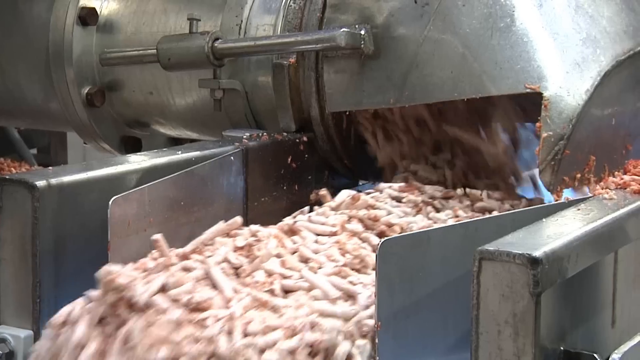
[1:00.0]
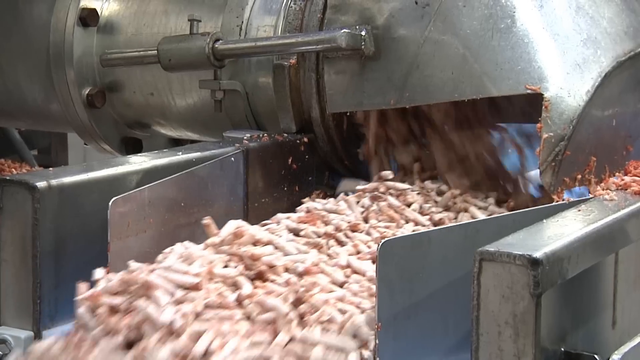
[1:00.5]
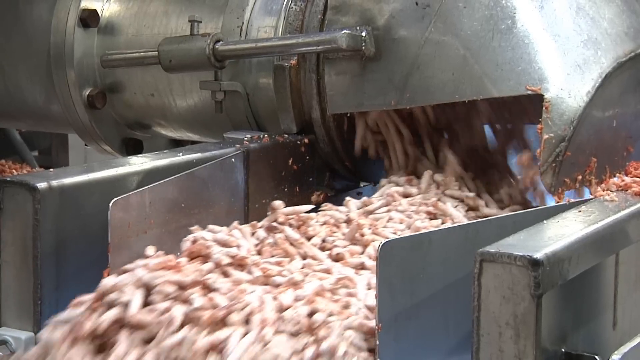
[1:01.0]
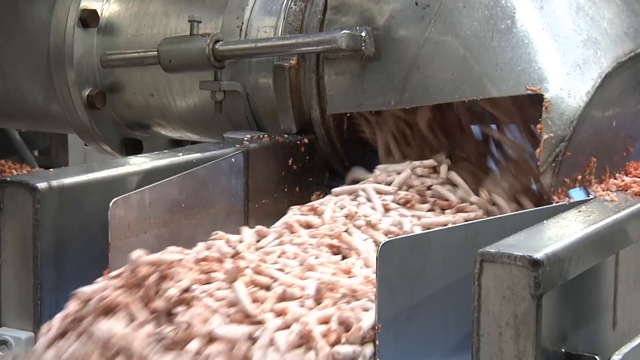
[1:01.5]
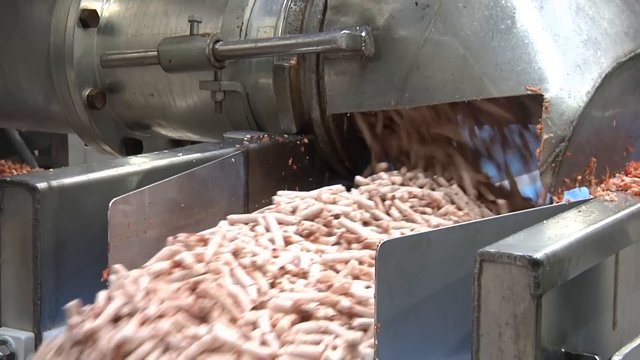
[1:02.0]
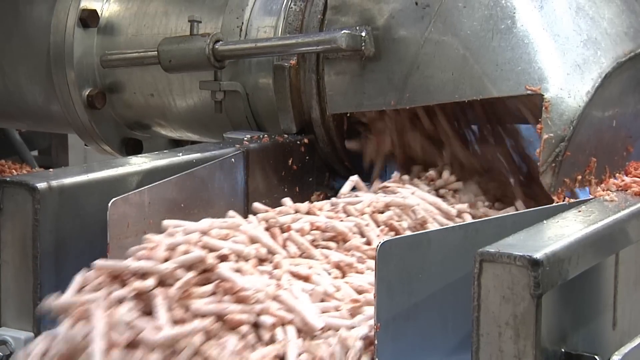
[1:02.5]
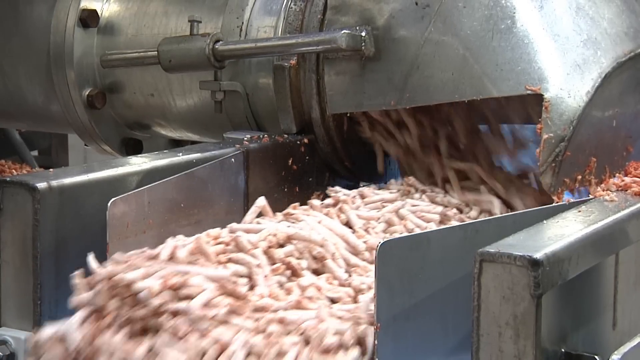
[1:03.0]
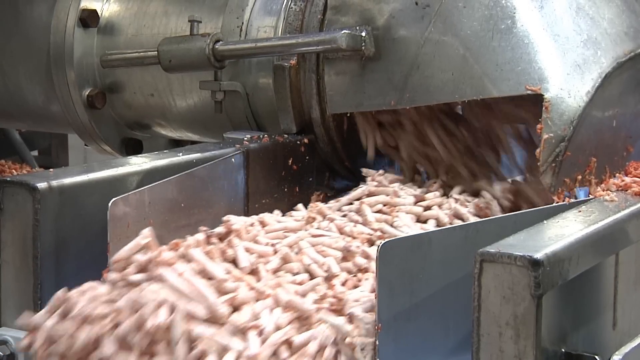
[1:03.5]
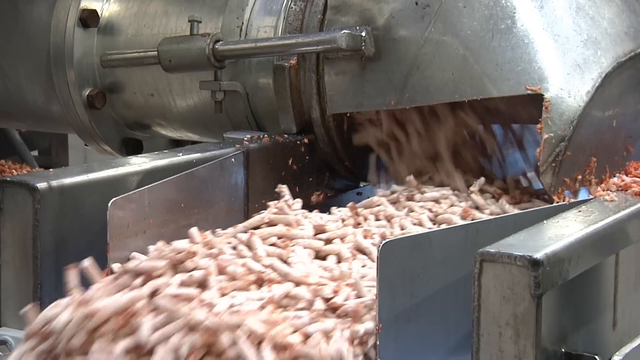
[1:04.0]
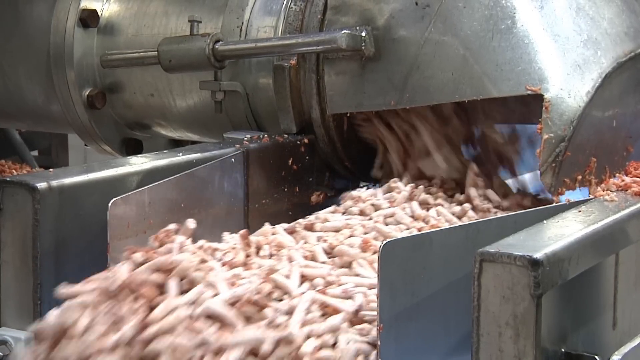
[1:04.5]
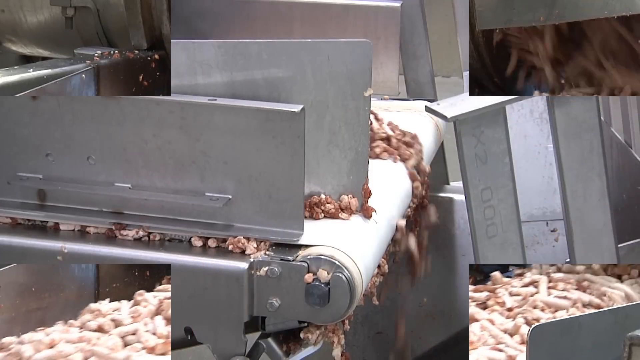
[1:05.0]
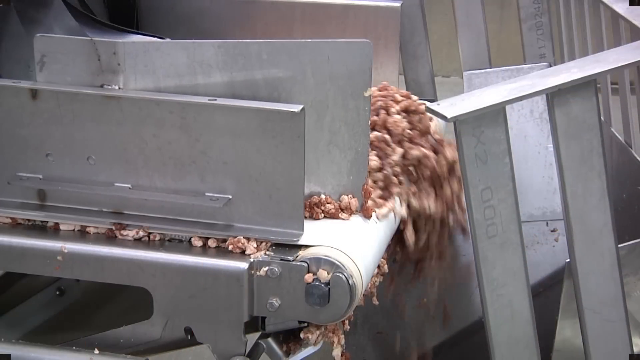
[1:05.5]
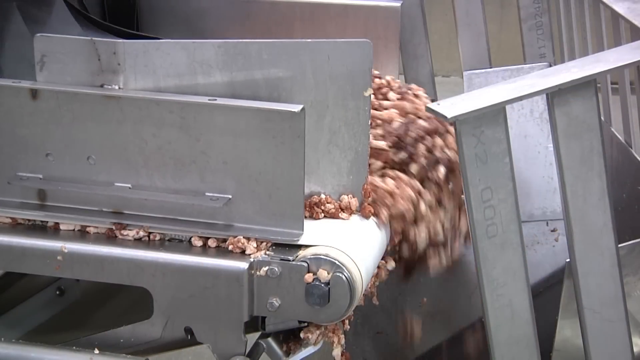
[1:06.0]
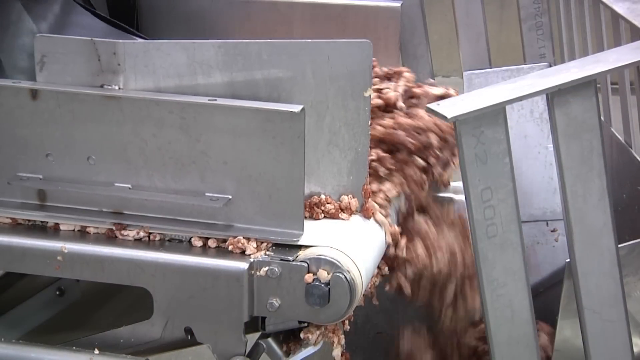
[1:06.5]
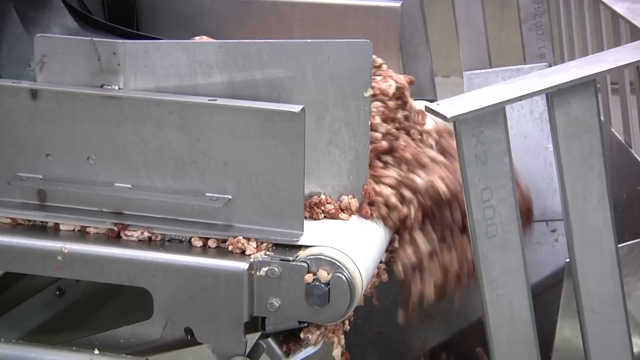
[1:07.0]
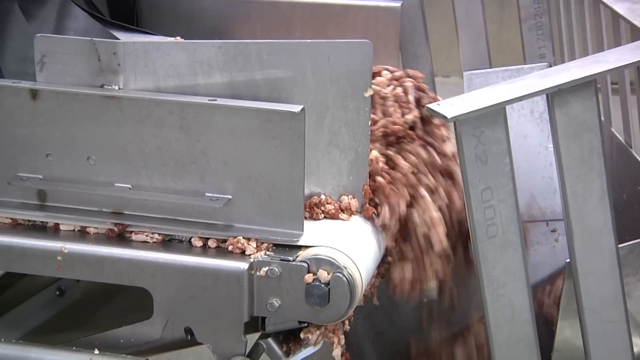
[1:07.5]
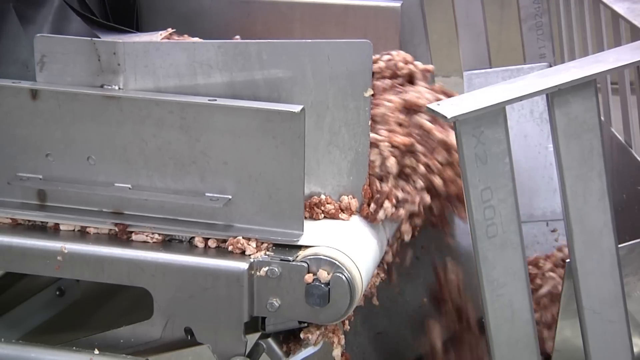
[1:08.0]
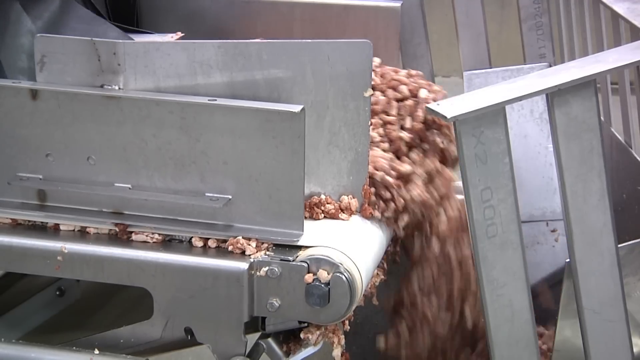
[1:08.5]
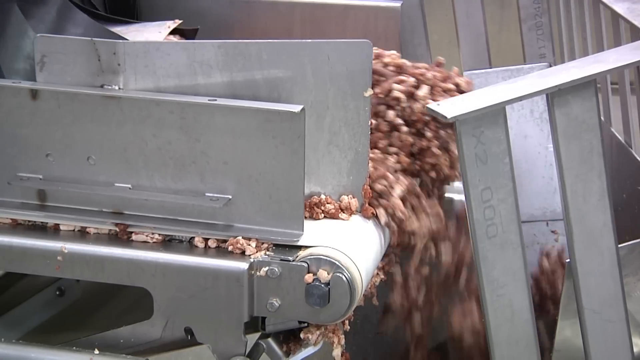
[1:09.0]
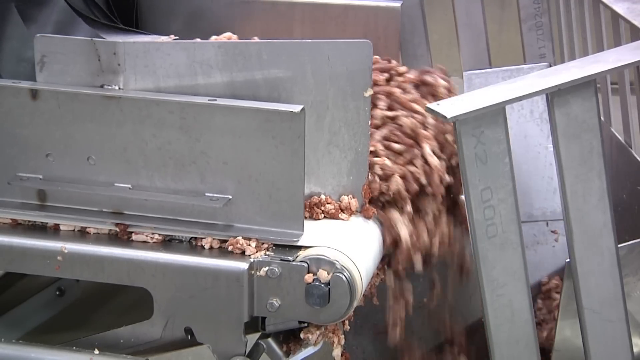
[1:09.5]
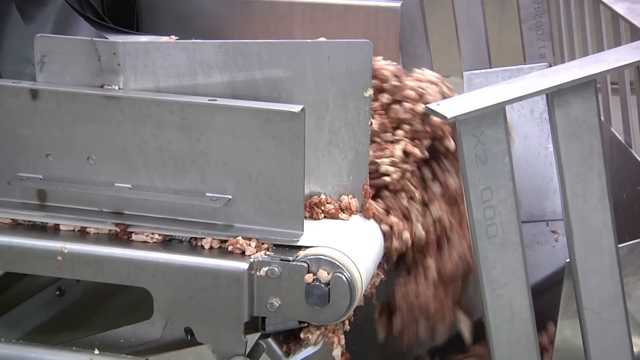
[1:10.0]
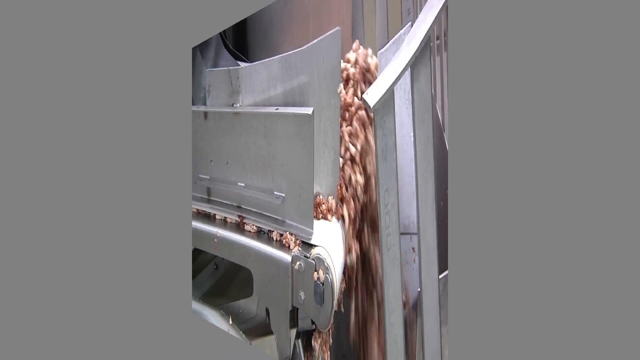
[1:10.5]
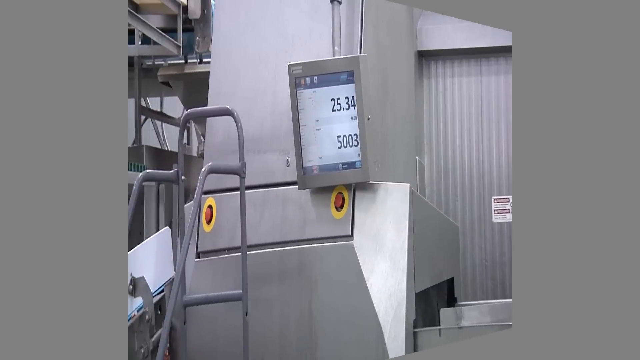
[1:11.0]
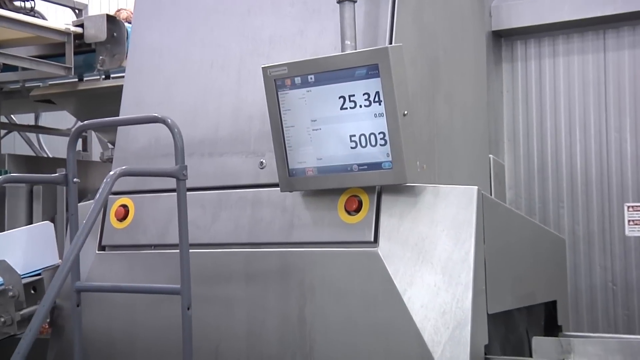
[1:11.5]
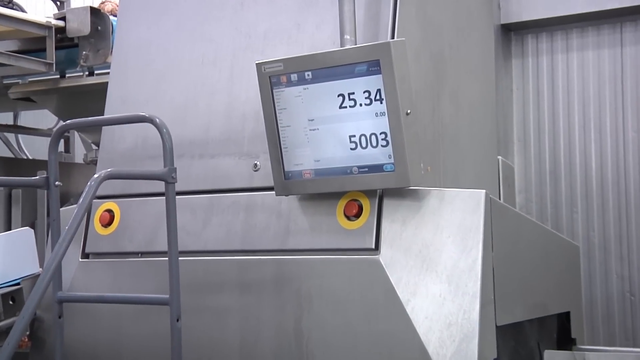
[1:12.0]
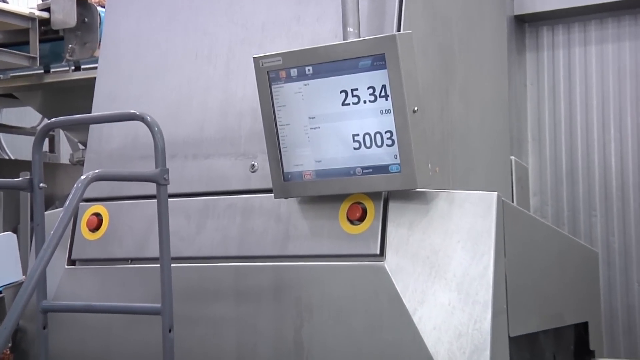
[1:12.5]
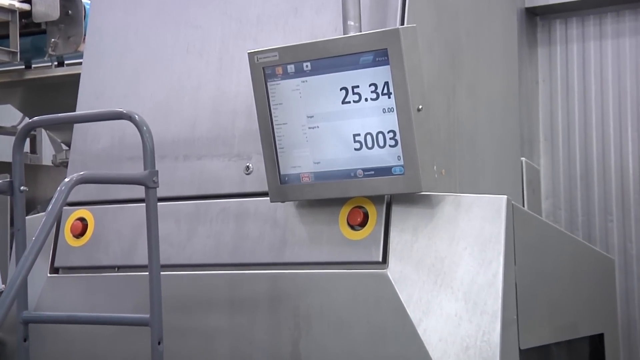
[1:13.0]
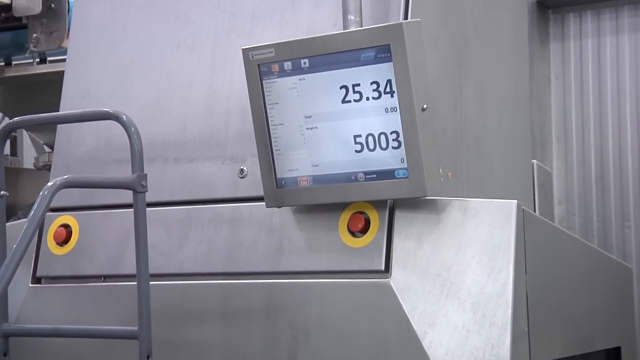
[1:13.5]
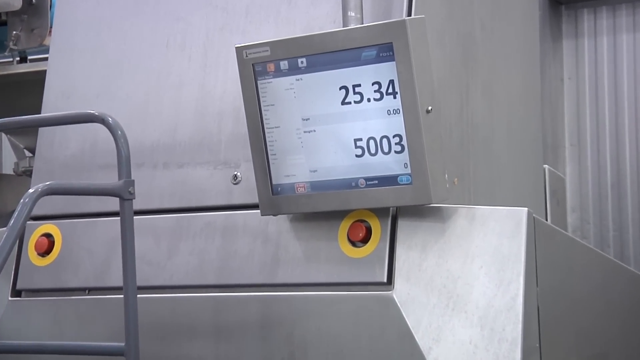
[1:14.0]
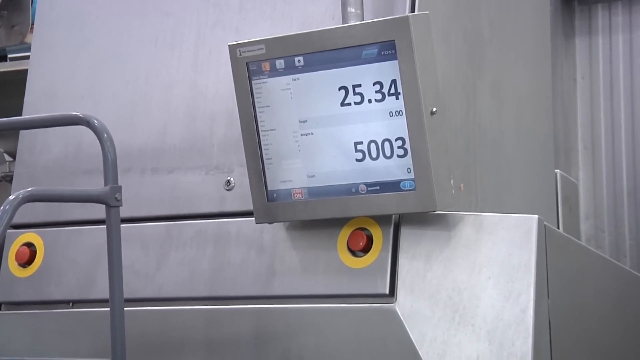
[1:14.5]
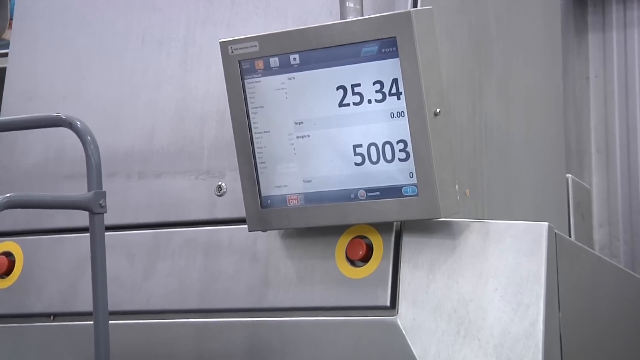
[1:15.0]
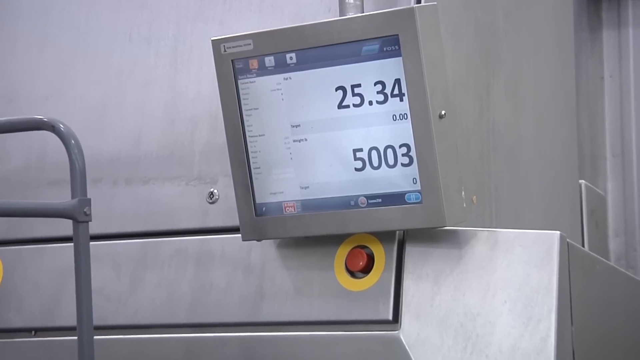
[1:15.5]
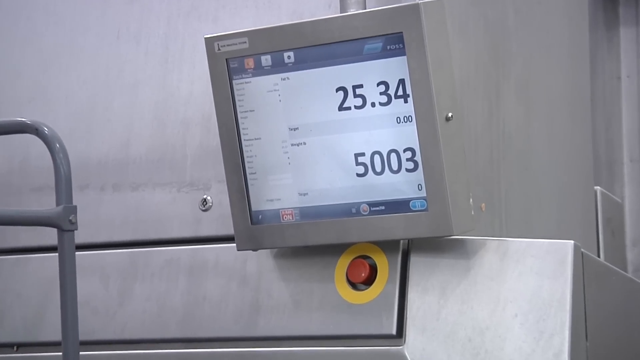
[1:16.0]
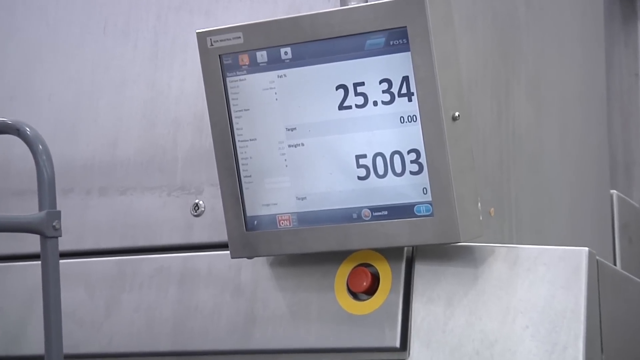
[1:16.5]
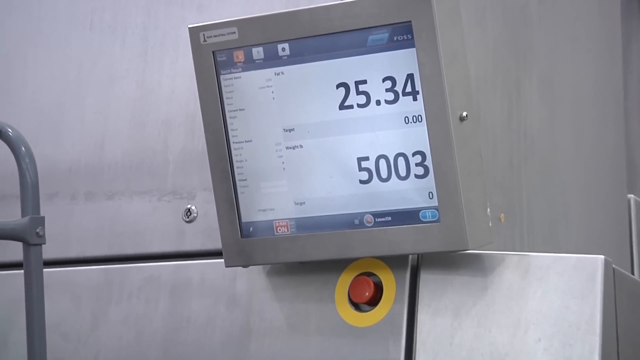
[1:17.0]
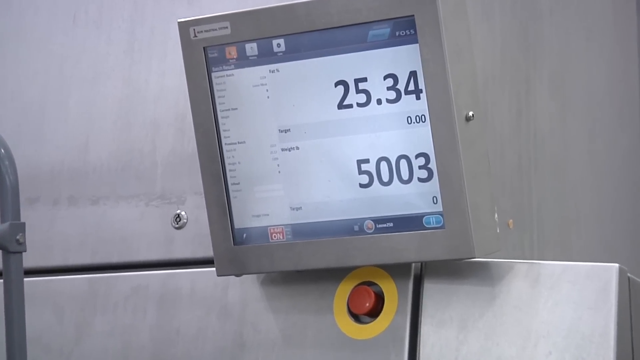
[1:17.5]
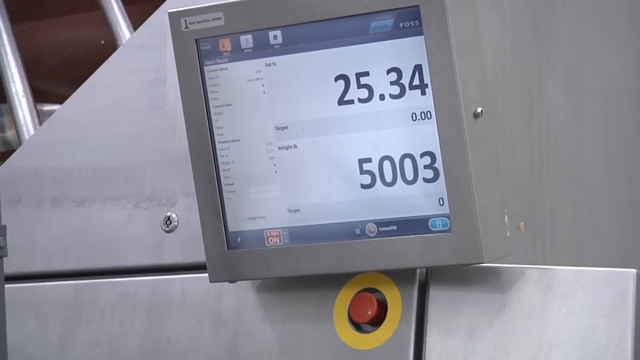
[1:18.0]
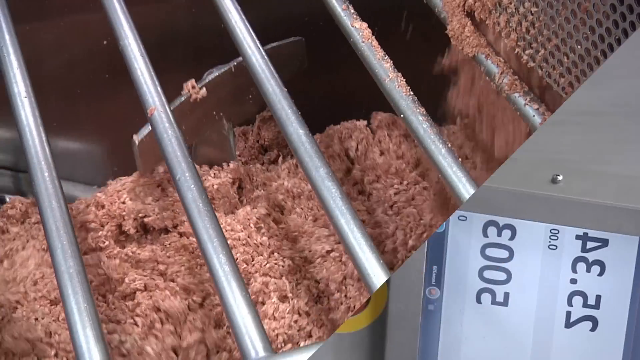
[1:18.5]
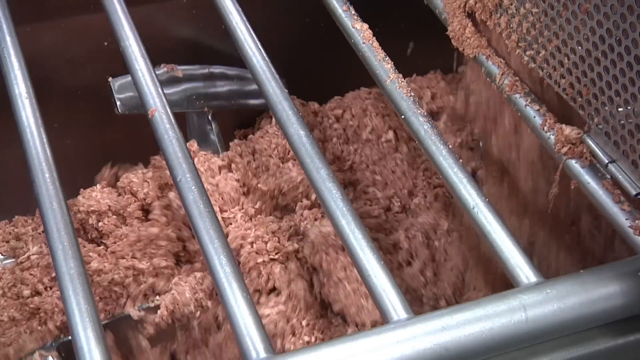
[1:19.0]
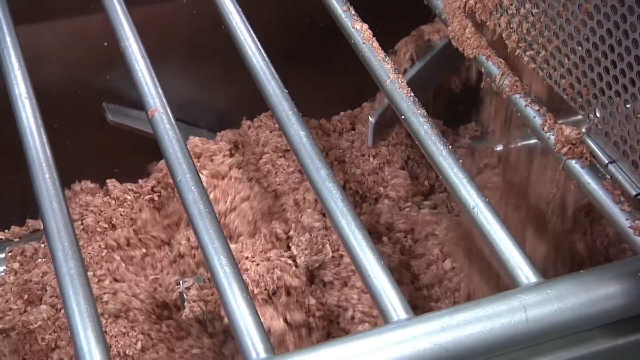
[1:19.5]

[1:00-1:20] Apparently freshly ground meat looks like it has just come out of some sort of press. It then looks like it is ground a little more further down the processing line. It goes into some sort of machine that may be heating or weighing the meat, and something seems to be recorded digitally. After that it is ground further and processed even more.